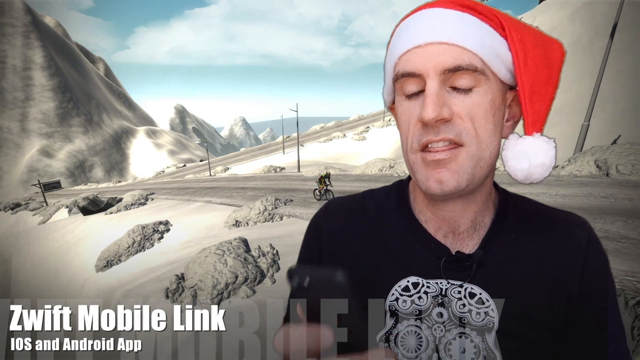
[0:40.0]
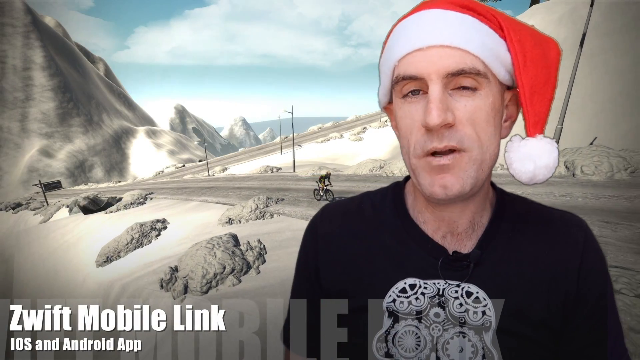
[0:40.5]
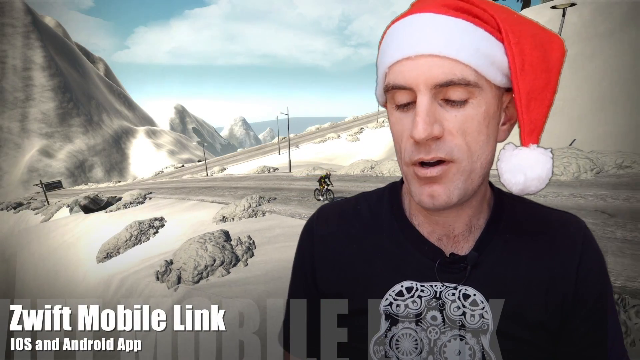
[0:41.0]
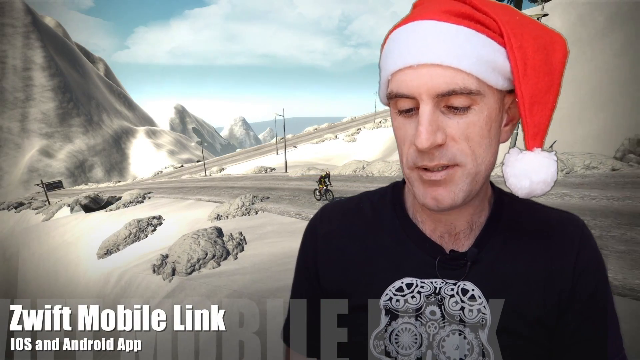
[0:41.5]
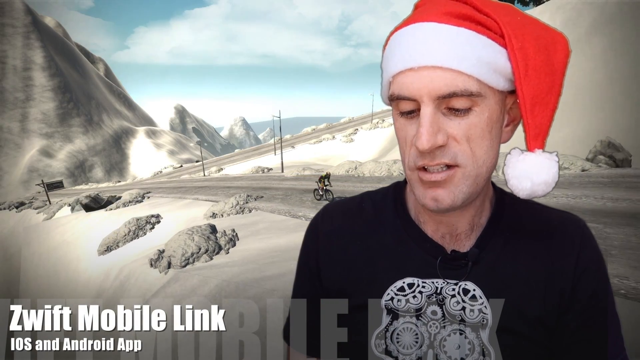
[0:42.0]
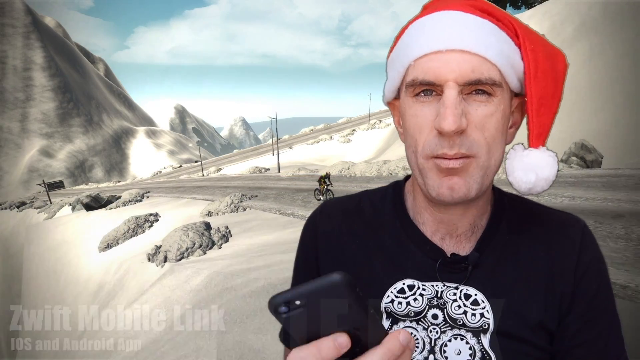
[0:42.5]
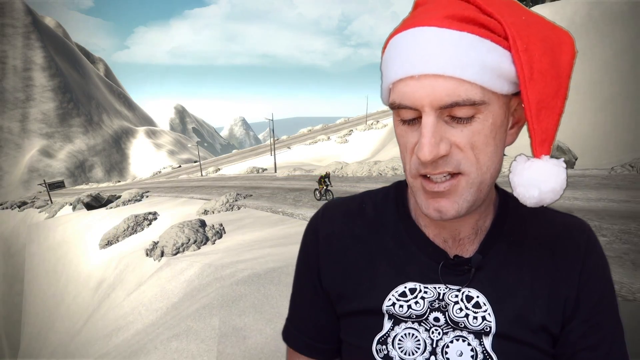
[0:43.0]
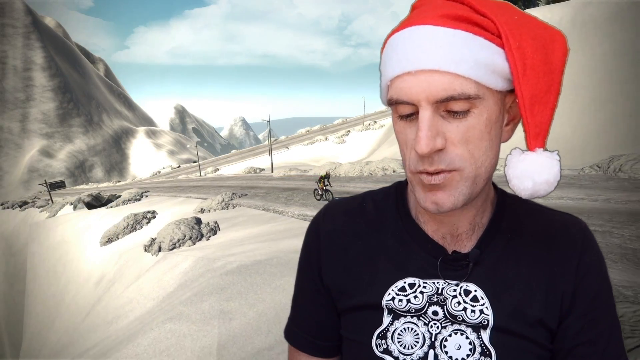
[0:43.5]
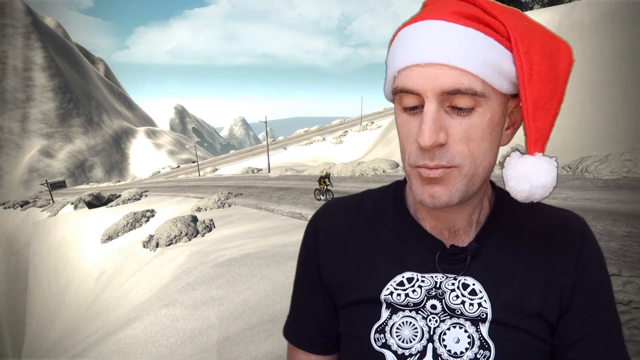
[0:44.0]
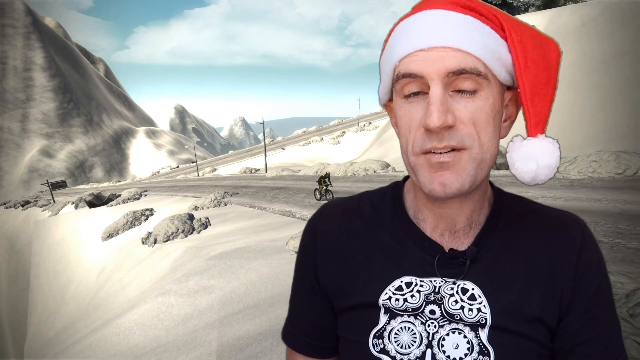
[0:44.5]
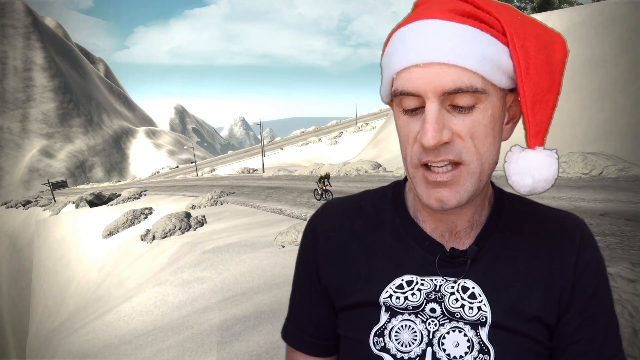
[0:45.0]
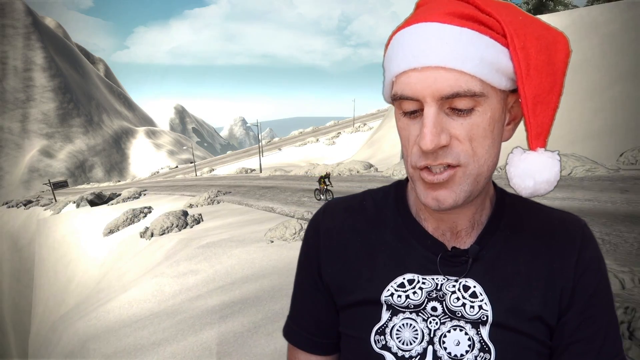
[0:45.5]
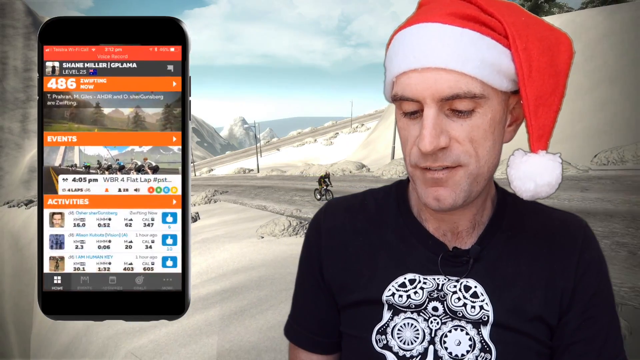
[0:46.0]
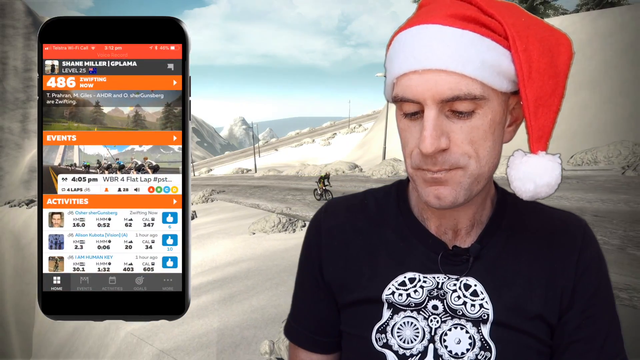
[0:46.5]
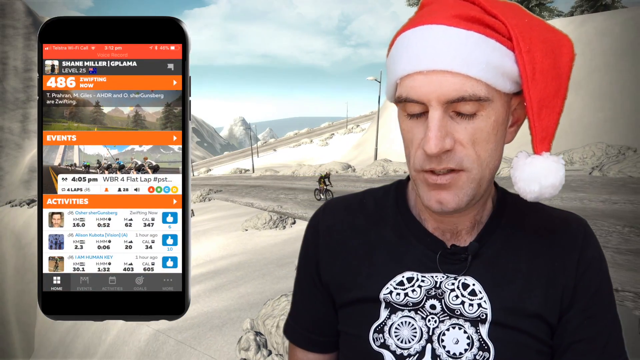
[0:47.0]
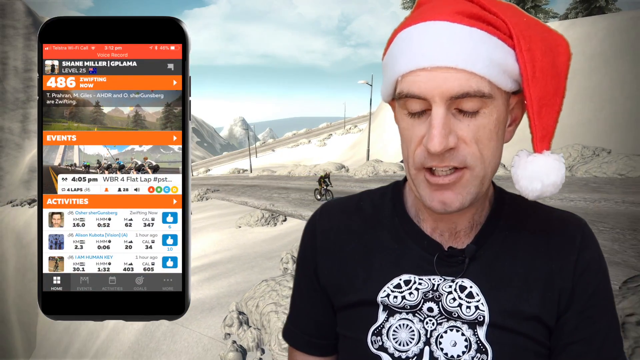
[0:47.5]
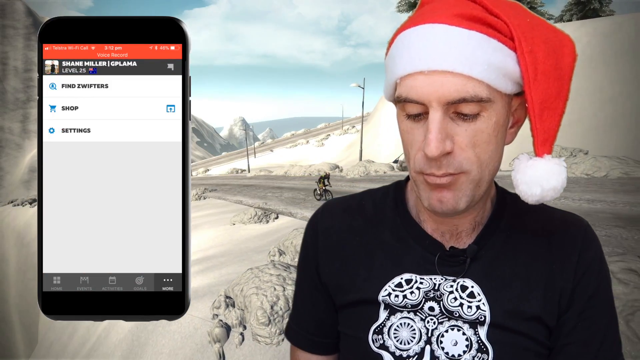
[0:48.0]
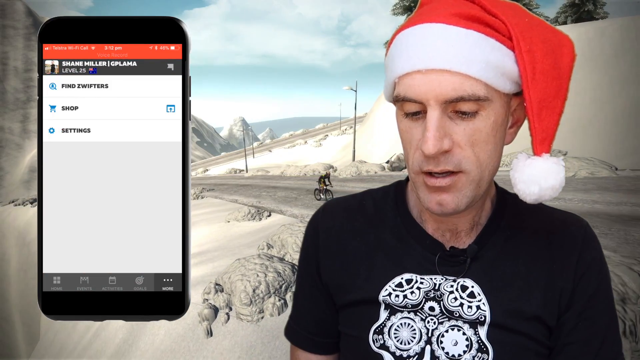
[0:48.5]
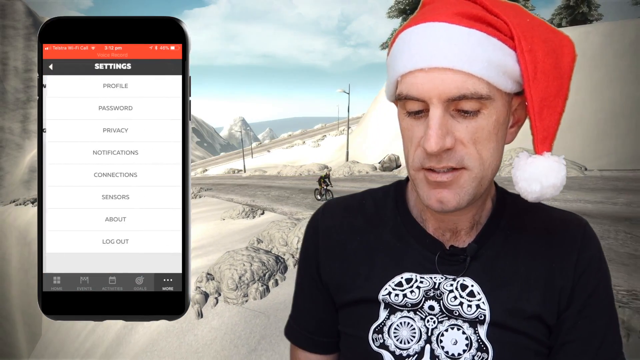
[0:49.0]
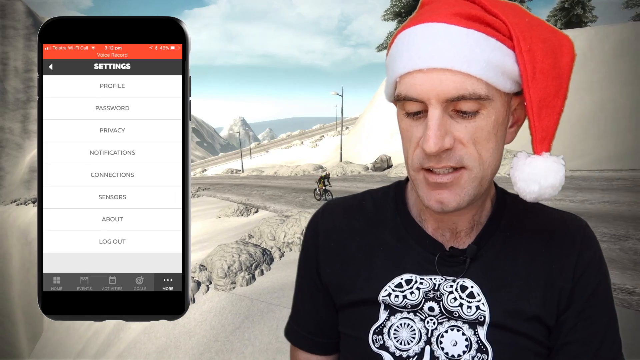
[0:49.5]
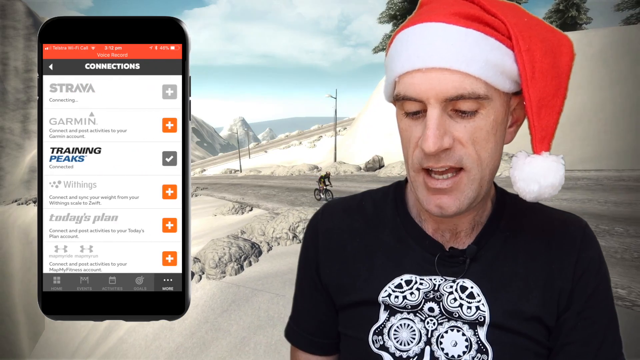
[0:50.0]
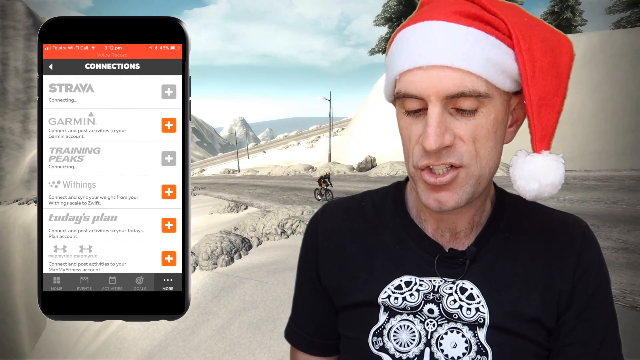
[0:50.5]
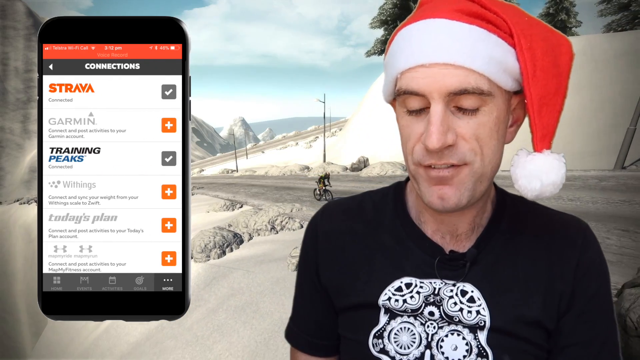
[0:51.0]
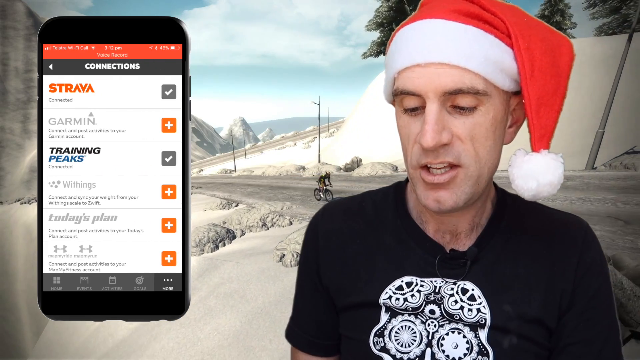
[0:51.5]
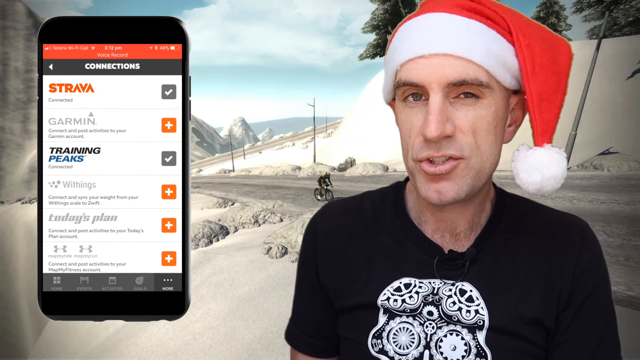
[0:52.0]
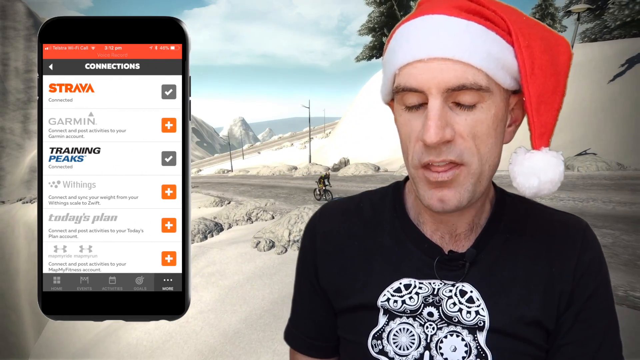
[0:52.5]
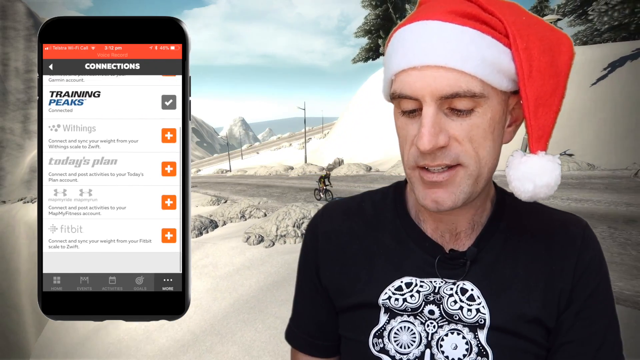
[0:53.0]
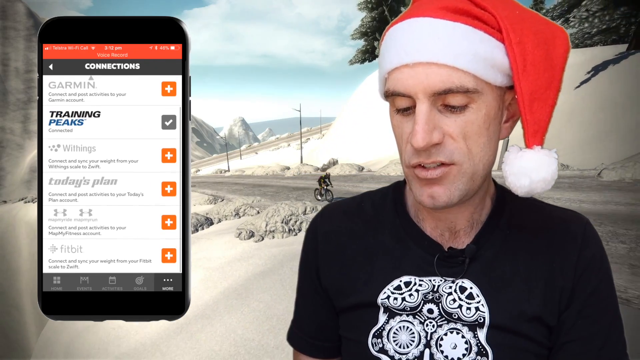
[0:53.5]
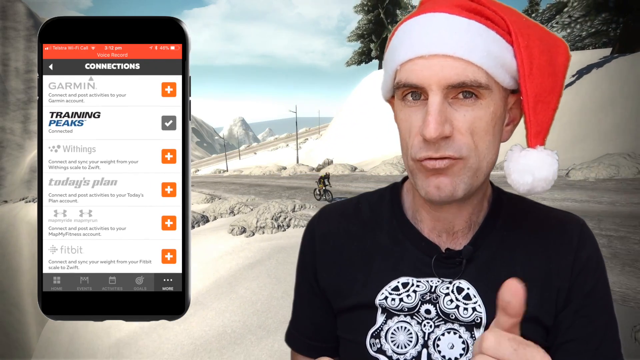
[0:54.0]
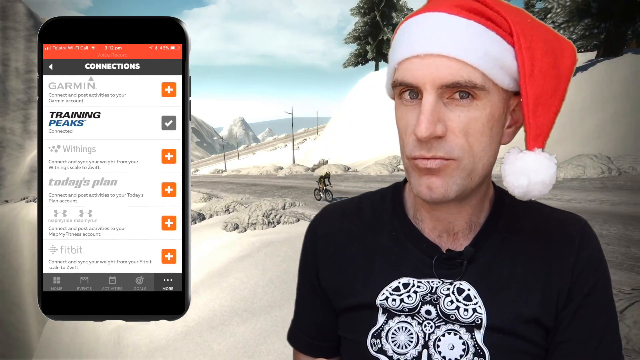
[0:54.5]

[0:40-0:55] The man, who is white and looks maybe to be in his late 30s or 40s, is in the corner of the screen, green-screened in front of a snowy road. The background is a video rather than an image, looking like drone footage of a snowy road with a biker going down the road in the background. He starts off sitting and talking, and he is holding his phone, briefly putting it into frame. Partway through, an image of his phone's screen appears, showing an app that seems similar to the website, apparently letting him connect fitness apps like Strava and Garmin in one place; the Strava and Garmin logos are visible. He shows two screens in the app: first what looks like a general, possibly home screen with a lot of information, including events and activities, and then a connections page where he apparently connects the different fitness apps.